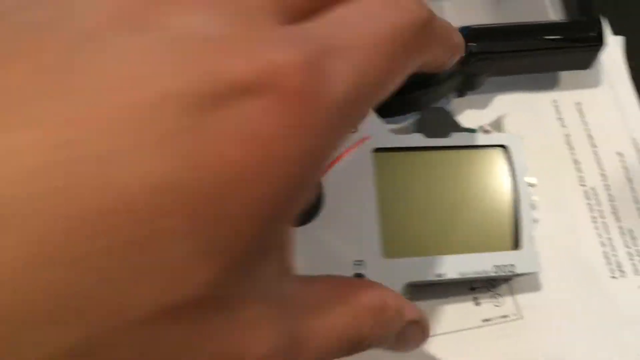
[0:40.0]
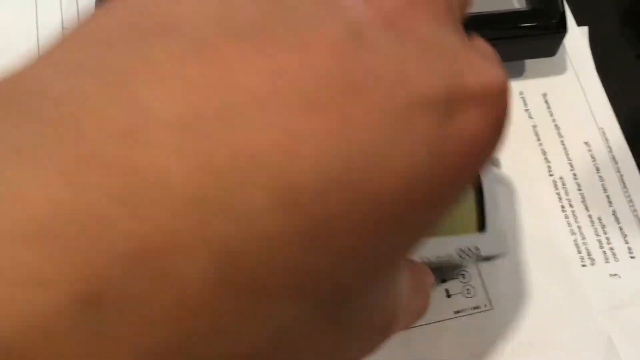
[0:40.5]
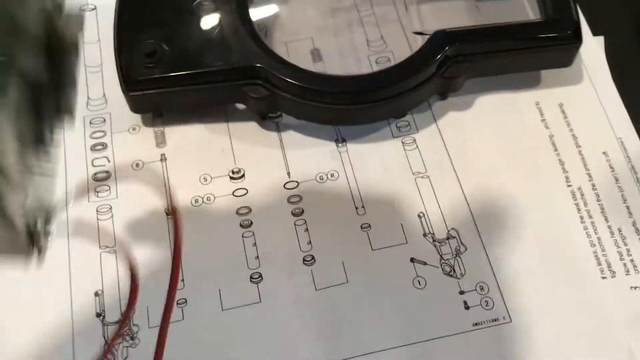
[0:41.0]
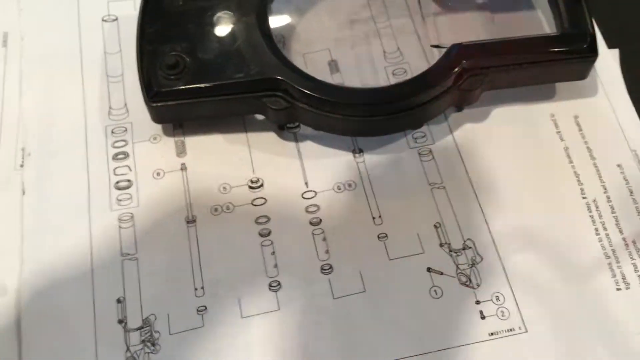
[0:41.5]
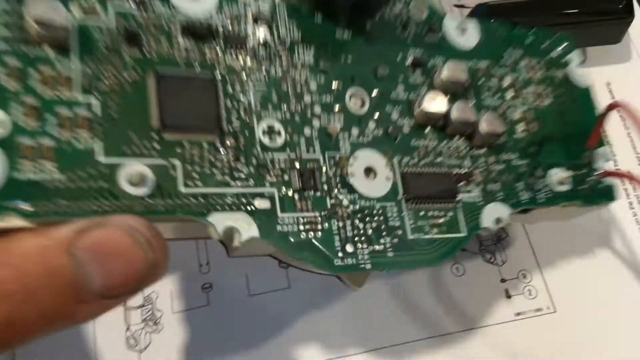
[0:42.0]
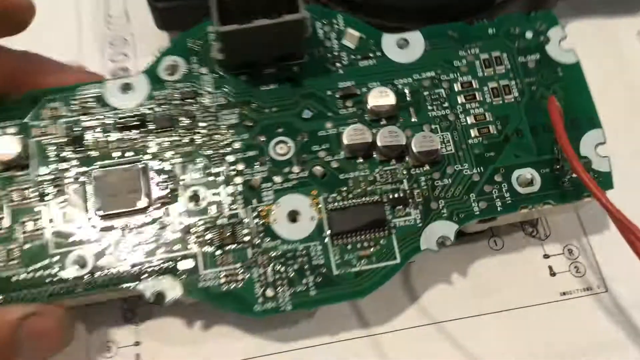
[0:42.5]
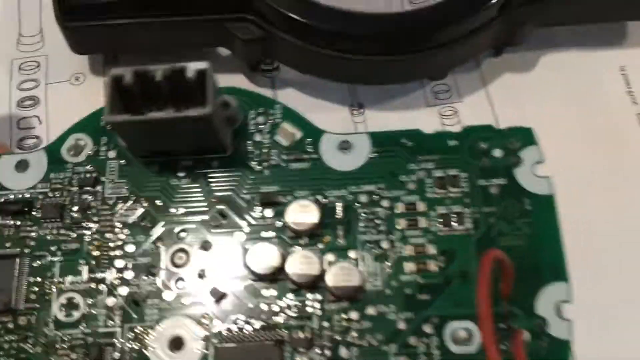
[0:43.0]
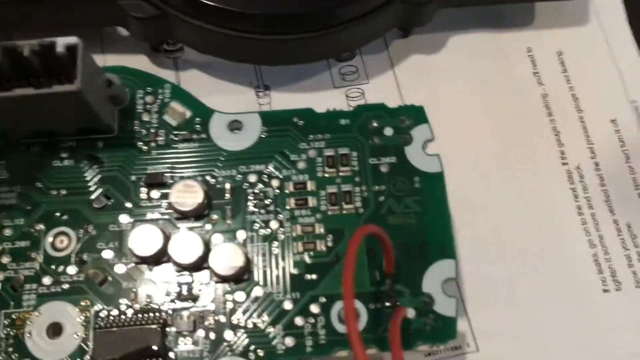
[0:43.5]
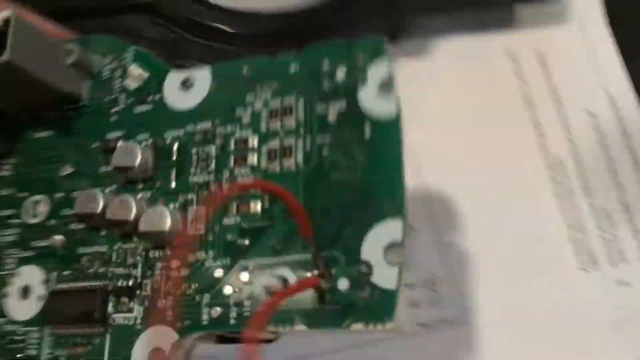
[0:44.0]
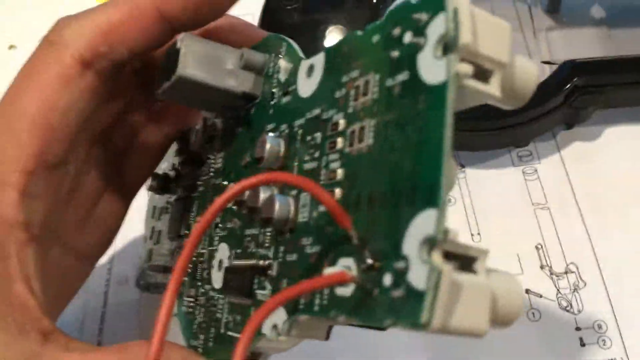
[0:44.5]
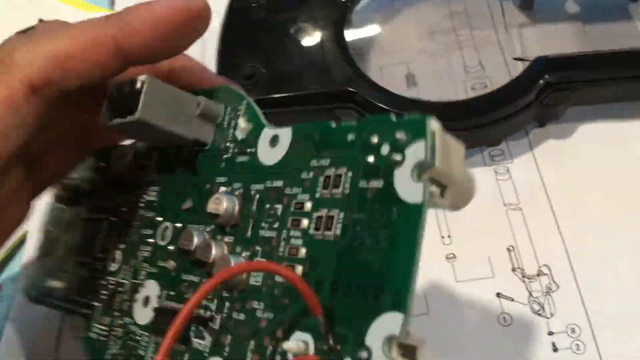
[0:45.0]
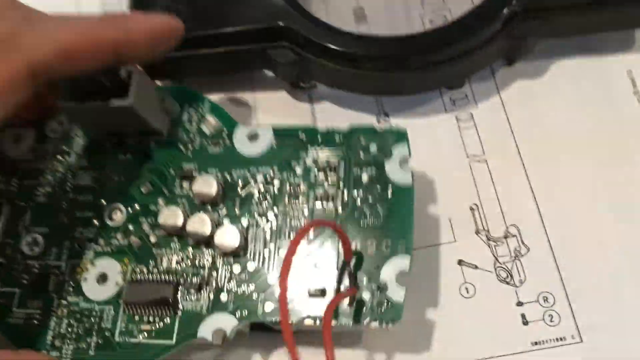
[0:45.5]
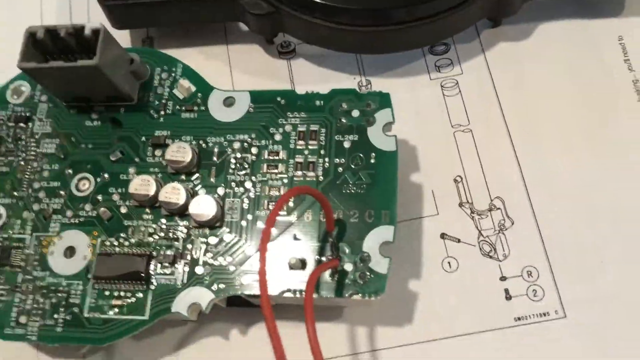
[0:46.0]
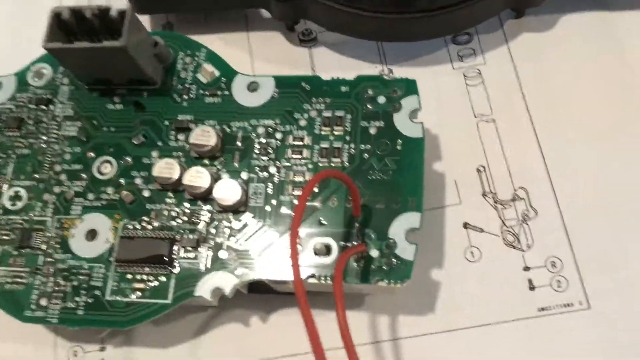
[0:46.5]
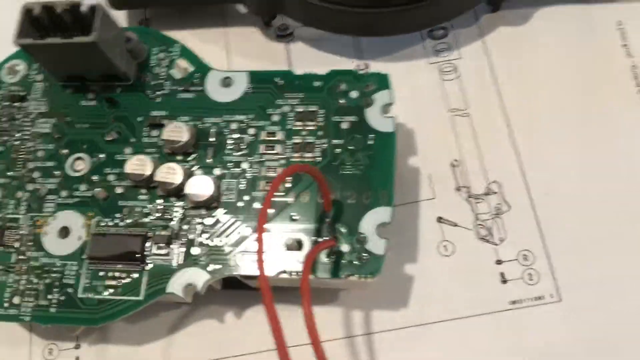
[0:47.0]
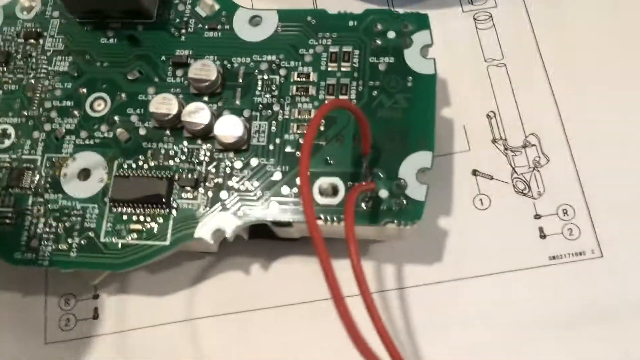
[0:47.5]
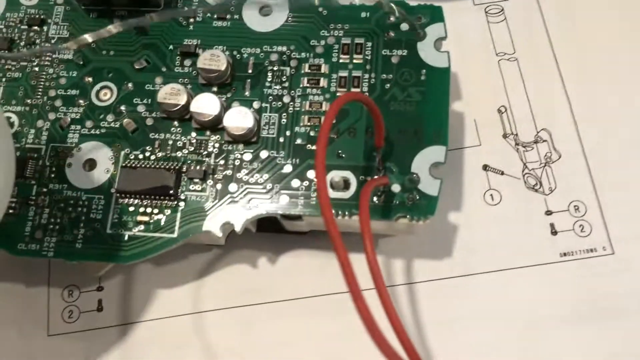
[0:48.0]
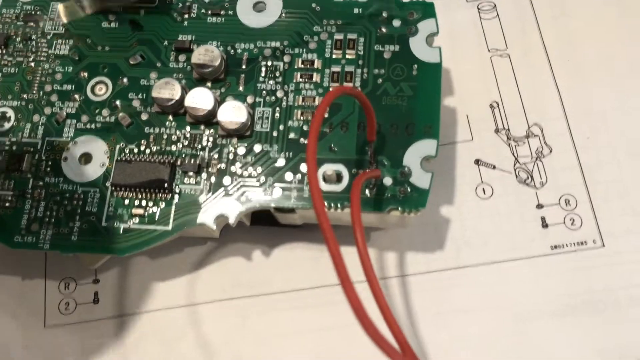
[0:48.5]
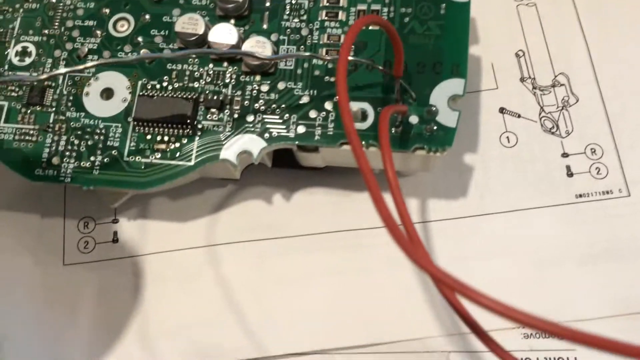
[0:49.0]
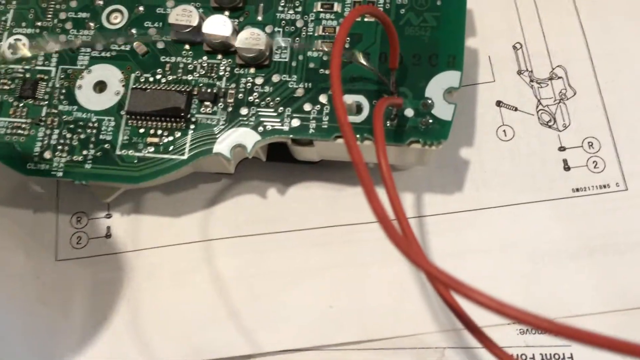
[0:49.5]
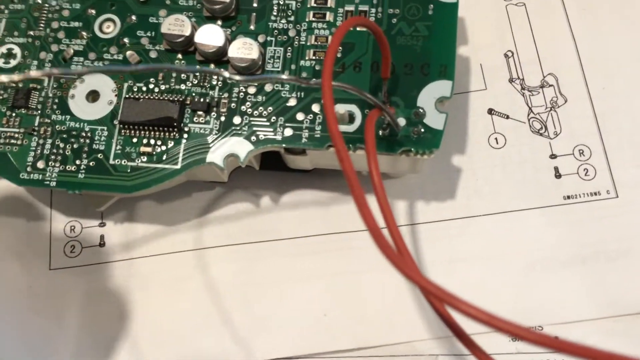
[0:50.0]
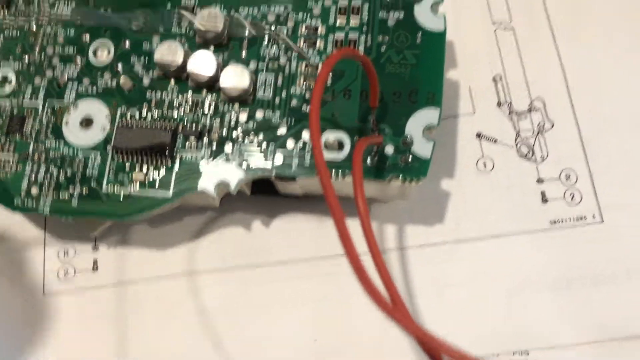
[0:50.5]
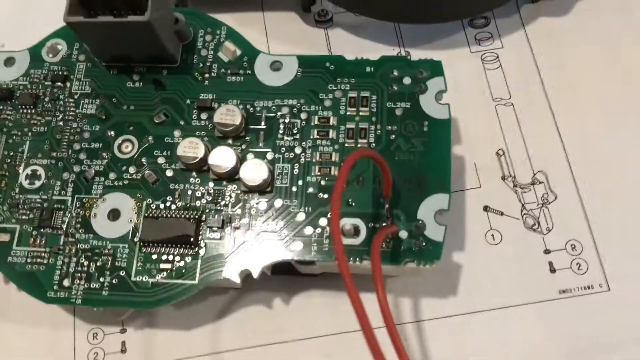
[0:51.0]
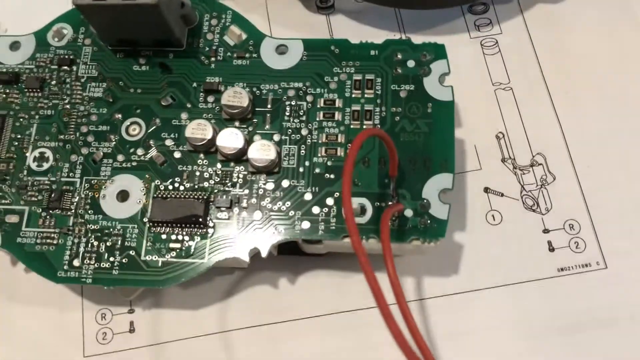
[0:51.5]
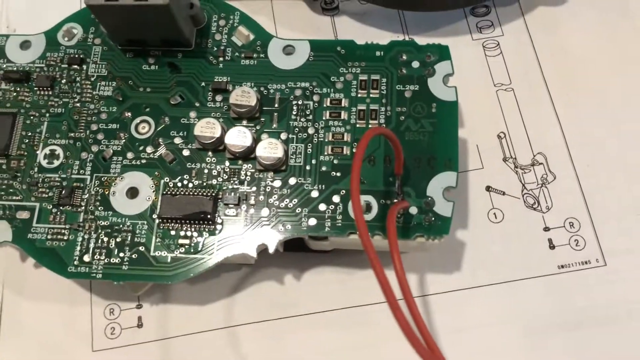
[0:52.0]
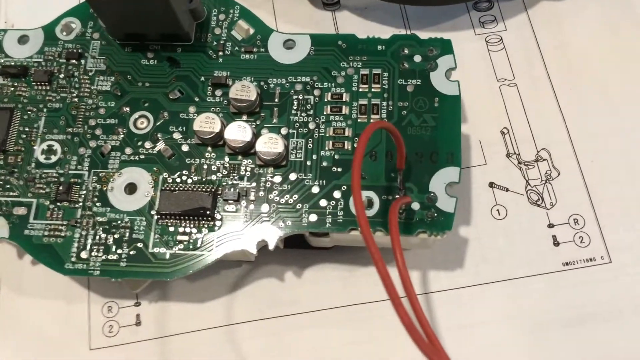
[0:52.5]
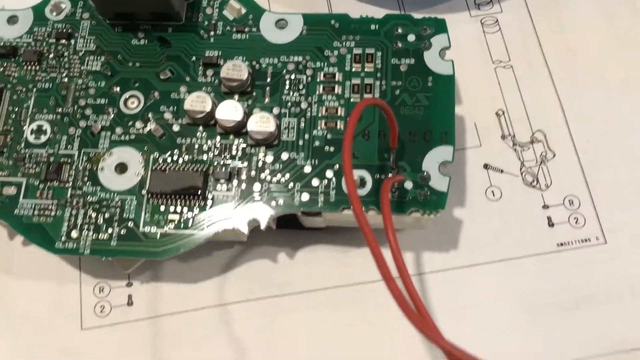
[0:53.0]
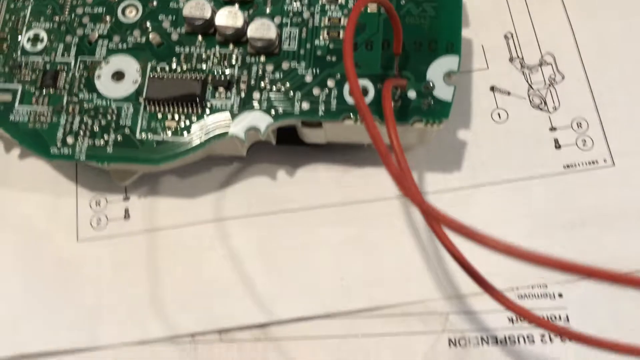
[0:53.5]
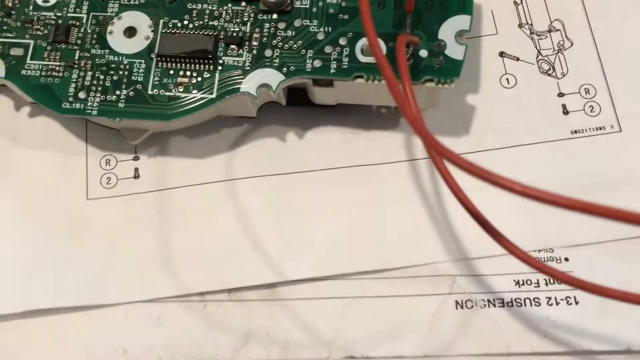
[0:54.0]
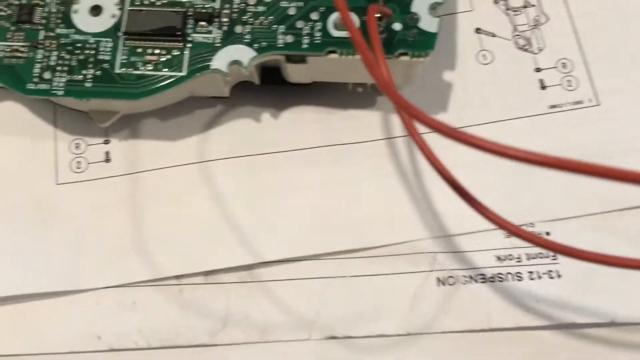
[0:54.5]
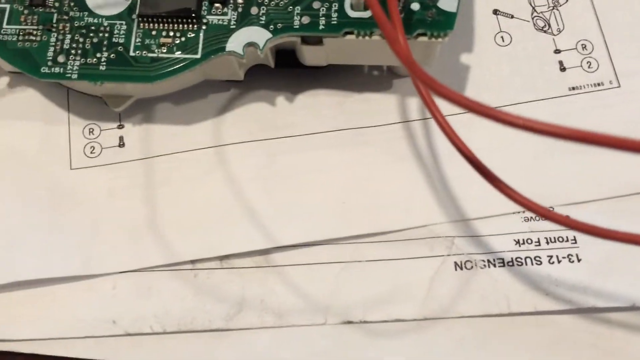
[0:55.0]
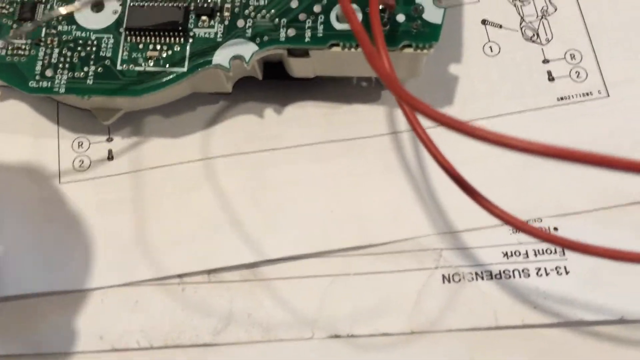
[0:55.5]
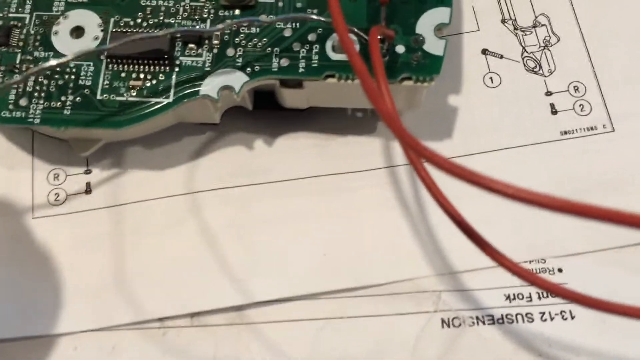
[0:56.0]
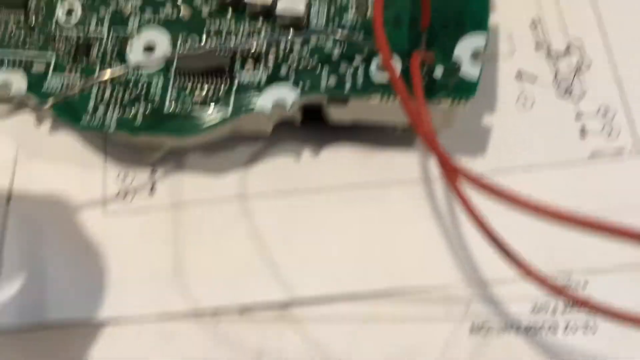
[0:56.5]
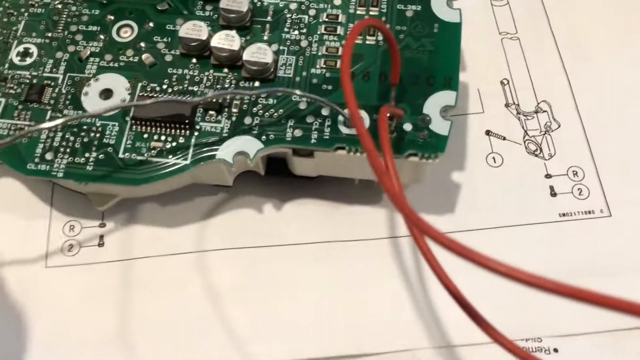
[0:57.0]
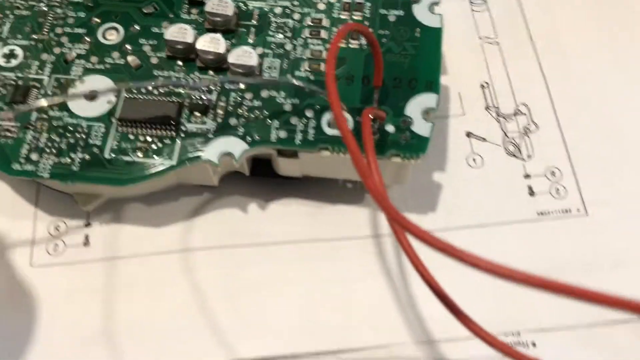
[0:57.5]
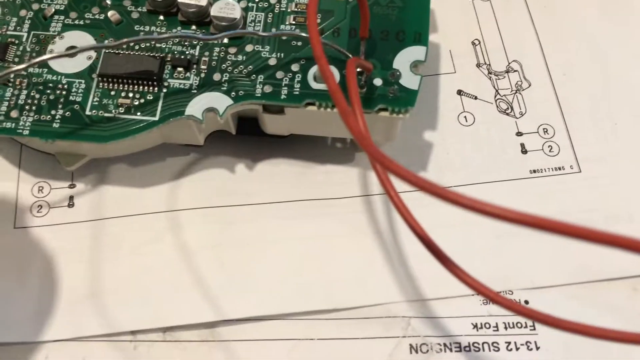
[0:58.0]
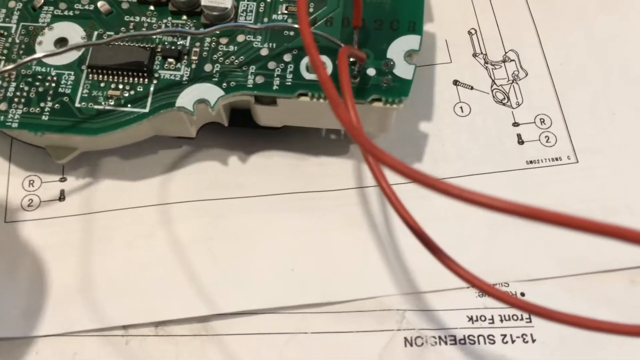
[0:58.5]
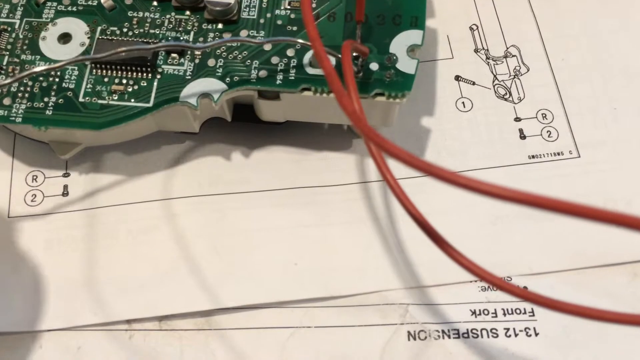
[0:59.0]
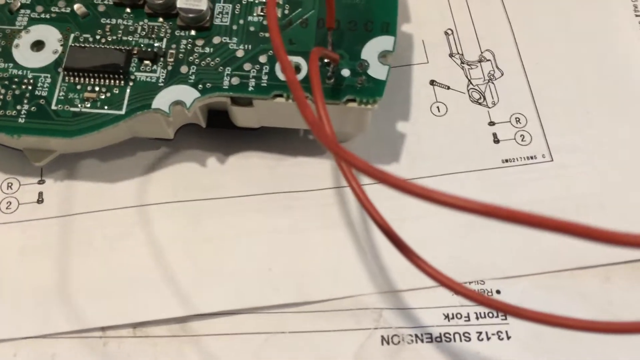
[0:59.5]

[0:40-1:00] The man seems to pick up the device entirely and flips it over to its back, showing the board with all the chipsets and soldering, connected with two red wires. He appears to be showing off the device. There is still just one individual, and everything else looks the same apart from the board now being turned from its front to its back side.